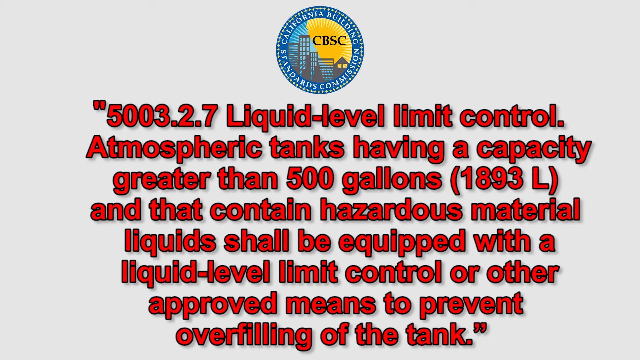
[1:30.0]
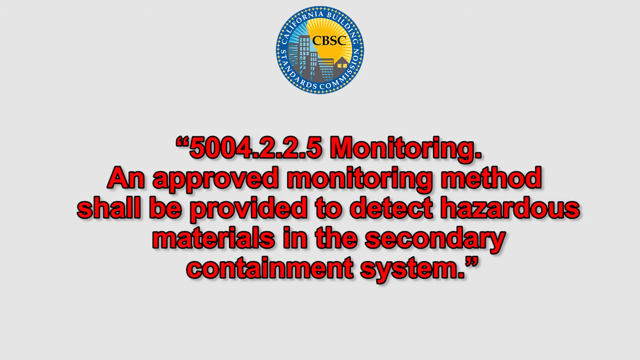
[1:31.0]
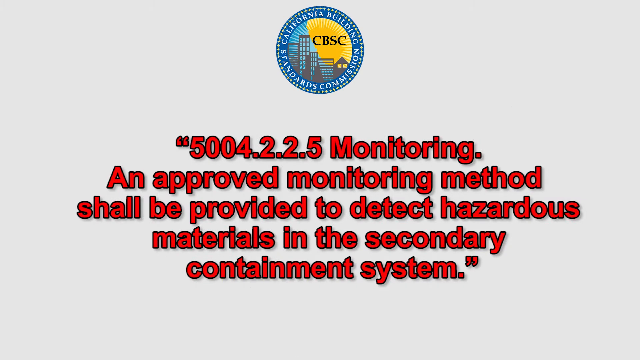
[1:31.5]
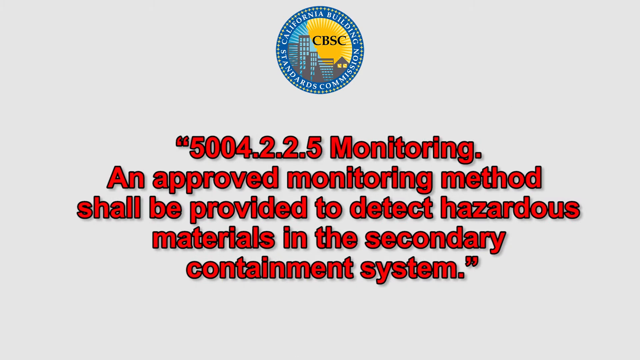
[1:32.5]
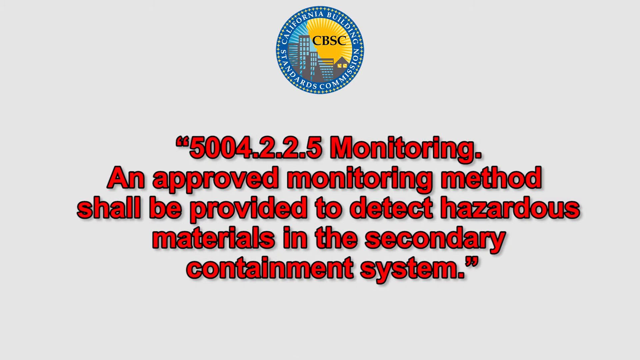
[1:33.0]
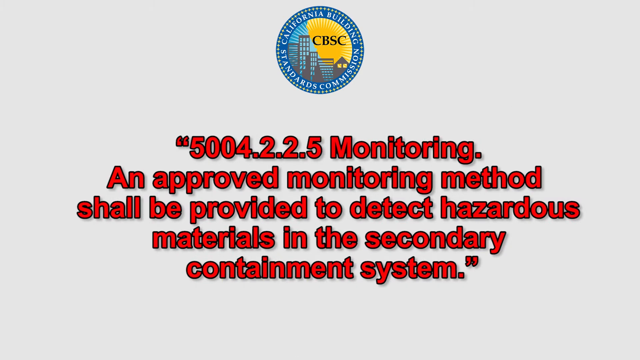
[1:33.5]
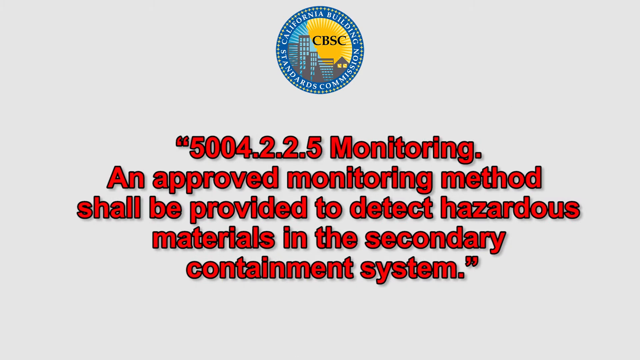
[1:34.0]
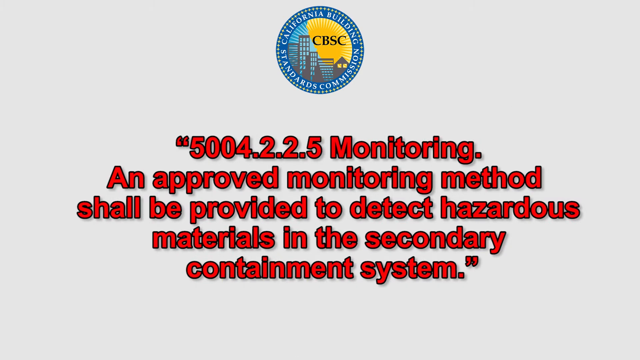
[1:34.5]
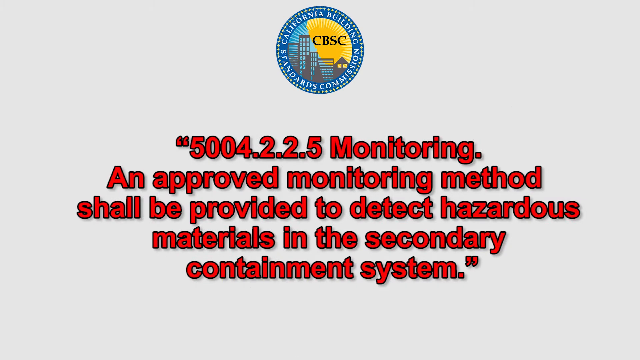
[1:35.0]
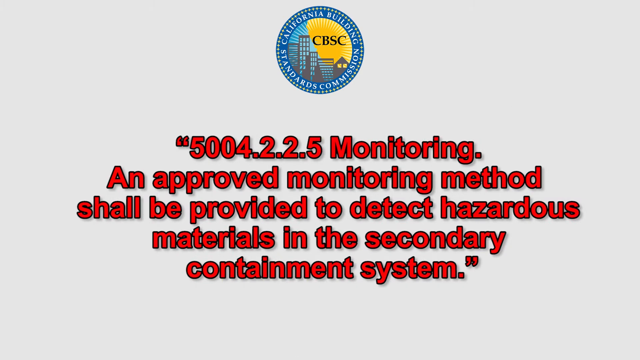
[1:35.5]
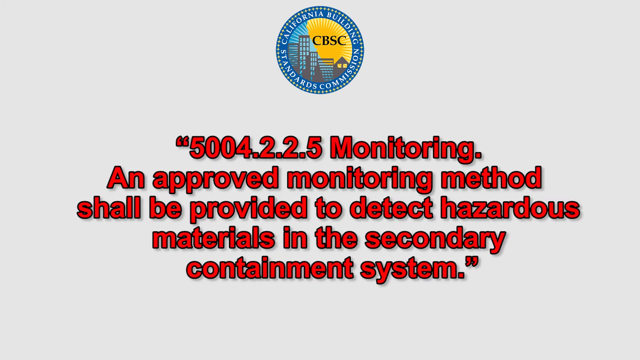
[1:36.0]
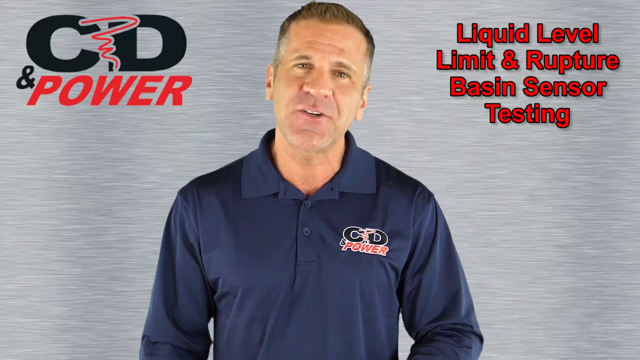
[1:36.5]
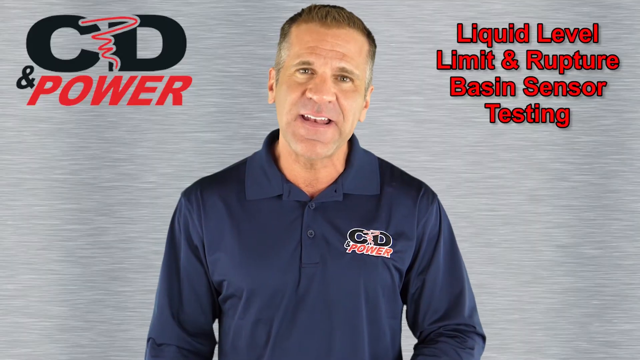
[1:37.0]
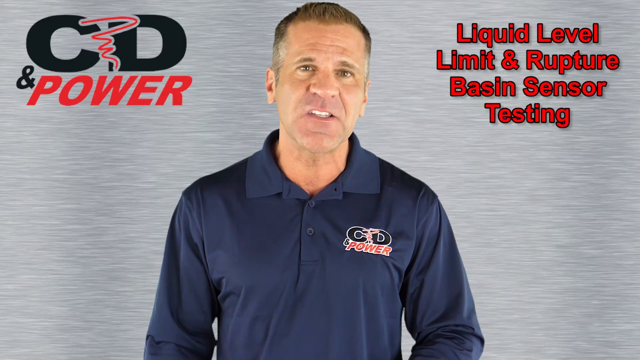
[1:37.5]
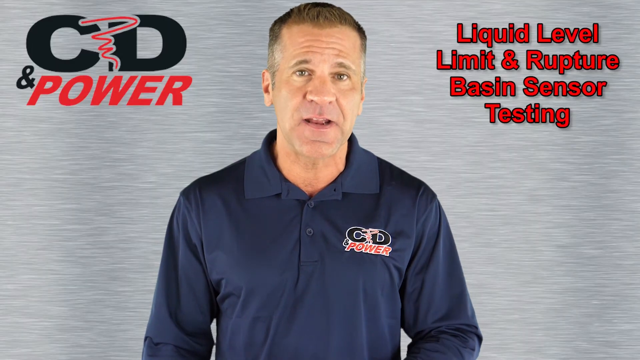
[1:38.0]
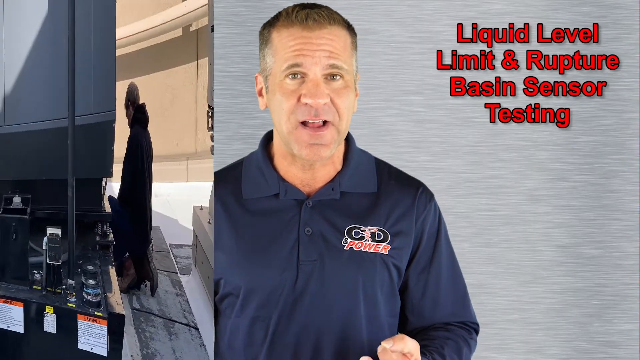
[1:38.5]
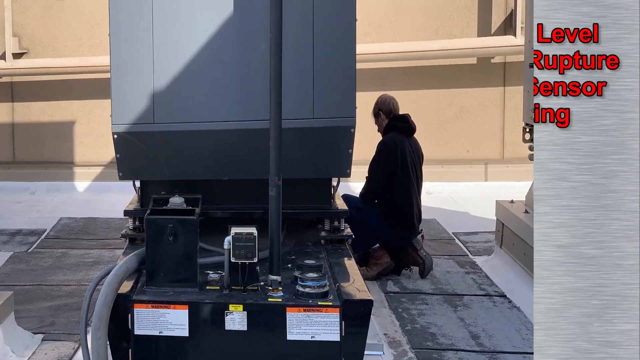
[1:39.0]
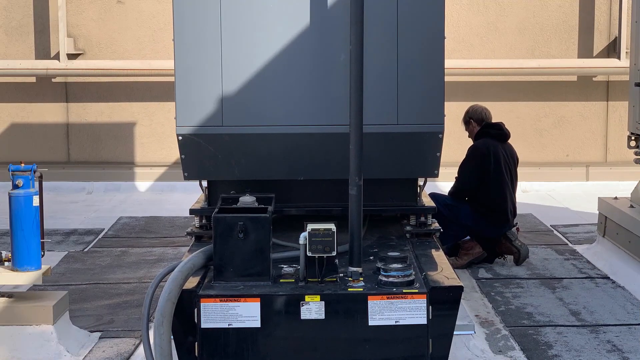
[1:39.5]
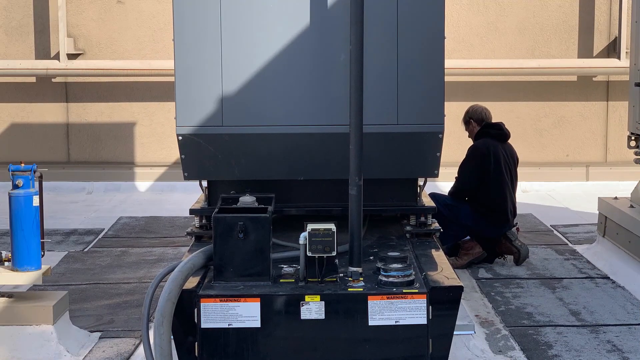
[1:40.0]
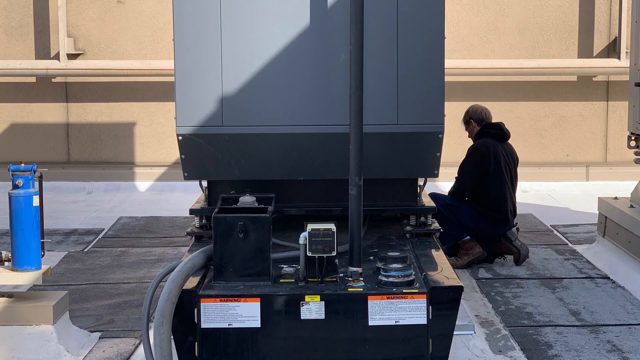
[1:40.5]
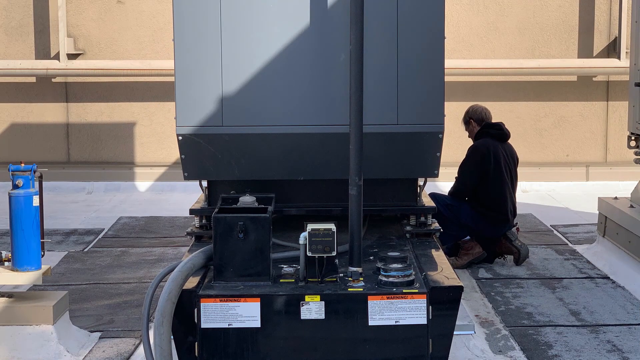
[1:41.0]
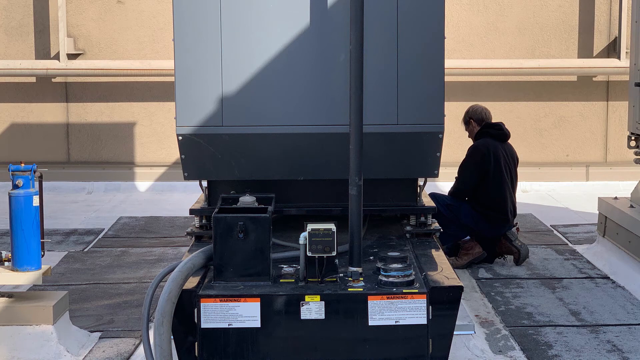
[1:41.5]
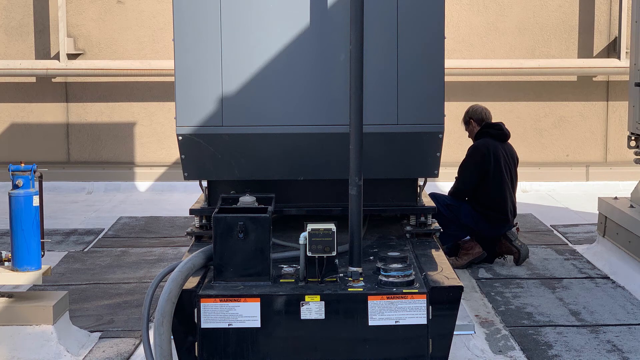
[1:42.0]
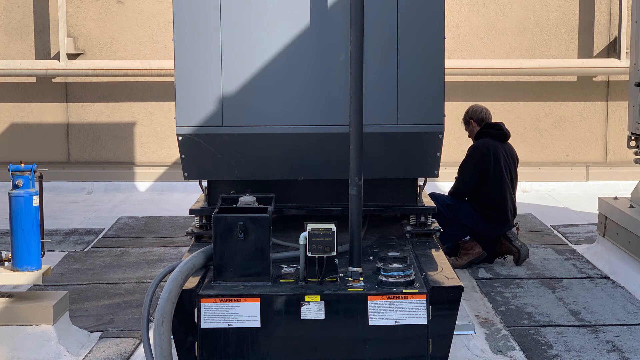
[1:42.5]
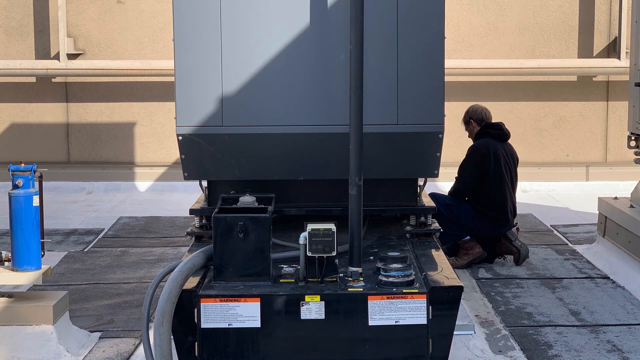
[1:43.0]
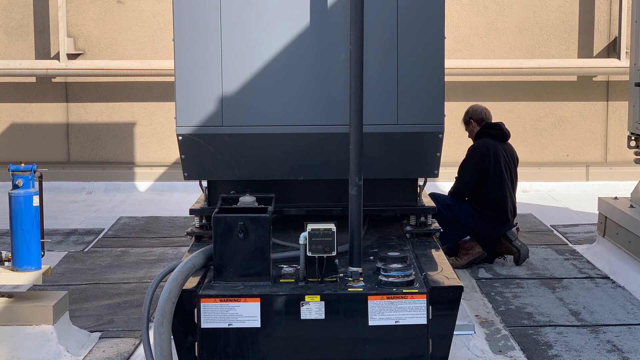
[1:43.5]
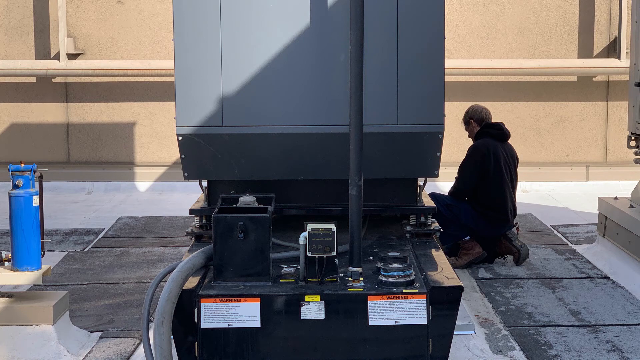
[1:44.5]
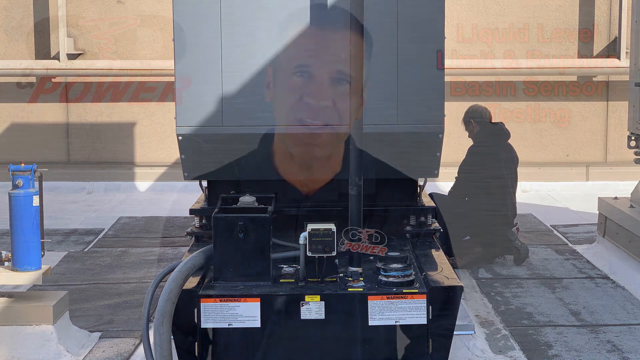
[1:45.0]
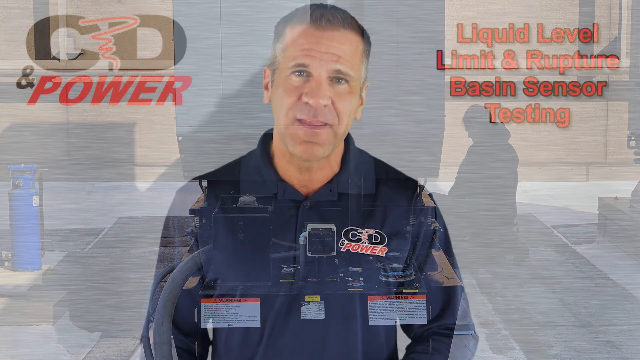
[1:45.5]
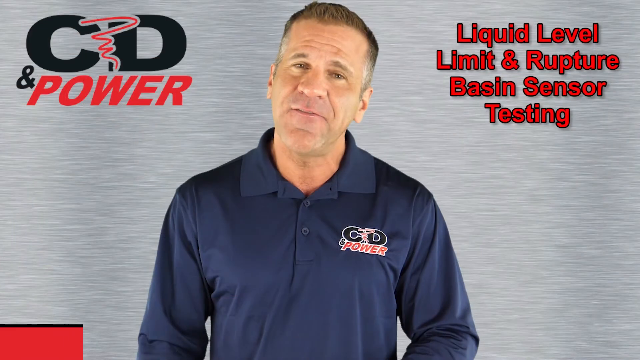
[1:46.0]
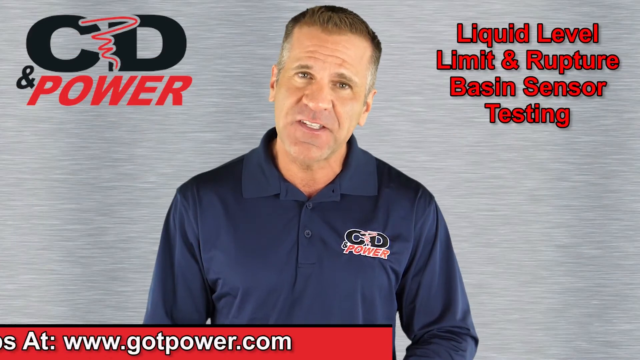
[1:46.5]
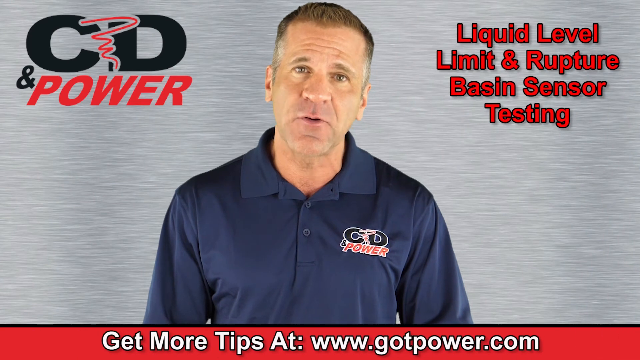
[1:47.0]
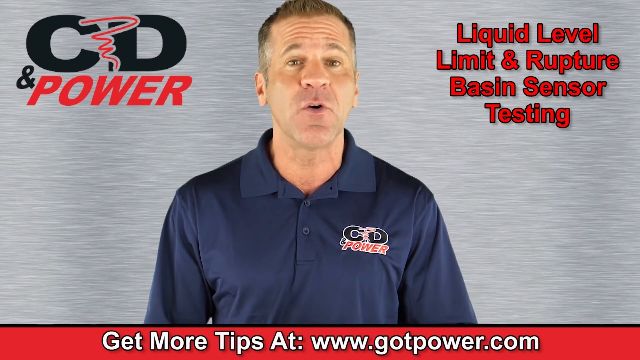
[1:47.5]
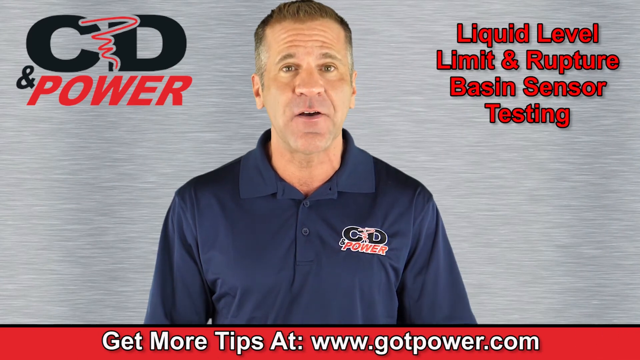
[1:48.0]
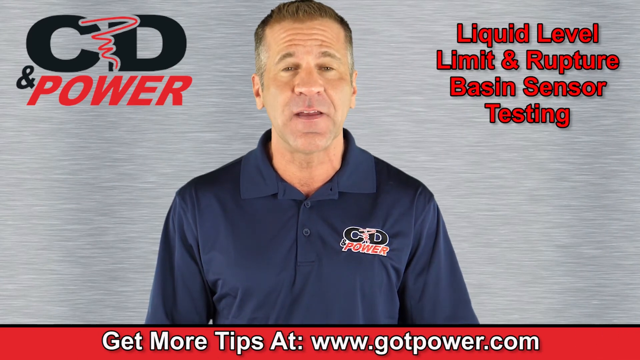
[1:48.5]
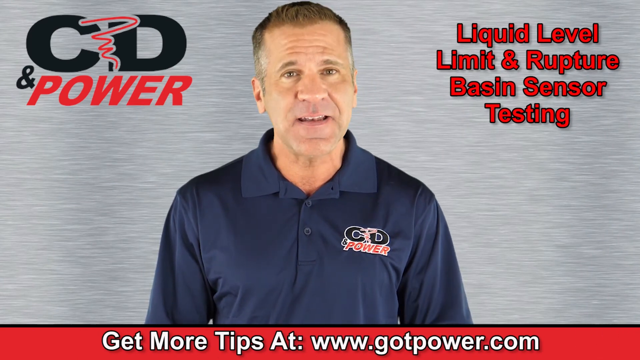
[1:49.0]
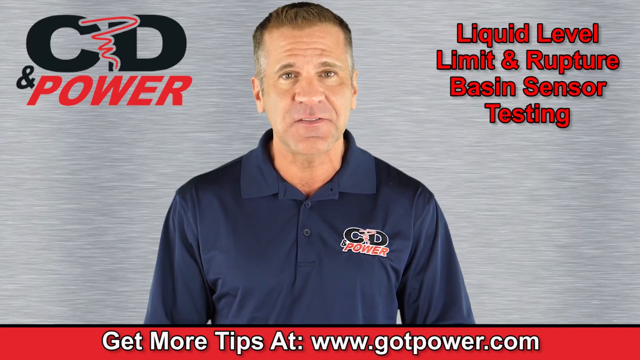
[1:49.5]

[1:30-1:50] Another batch of text follows, in quotation marks, possibly quotes from the CBSC: "5,004.2.2.5 monitoring, an approved monitoring method shall be provided to detect hazardous materials in the secondary containment system." The video then transitions to the man talking, and very quickly switches to a picture of a completely different man on the right, who looks like he is doing maintenance on a device in the middle of the screen. The device does not resemble anything seen earlier: a giant gray box with some sort of motor behind it and below it. He crouches down, looking at the parts more closely.